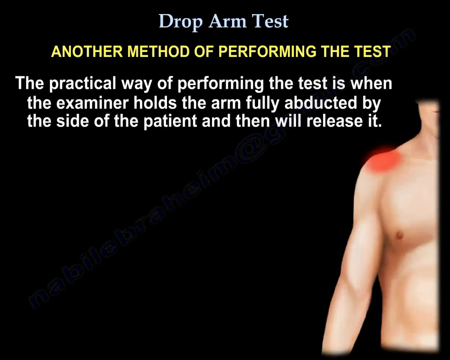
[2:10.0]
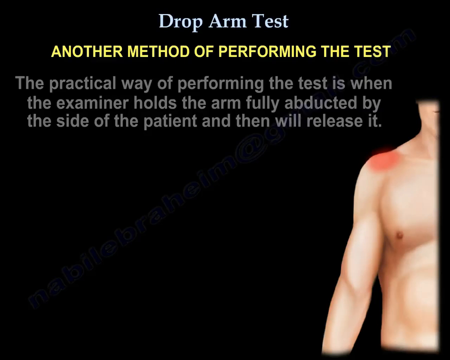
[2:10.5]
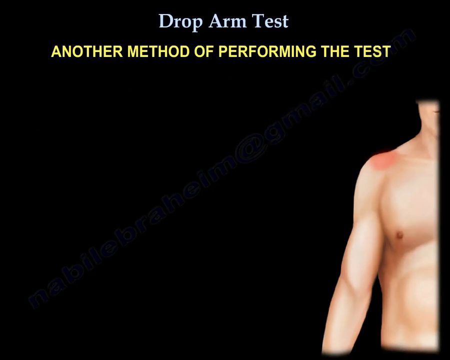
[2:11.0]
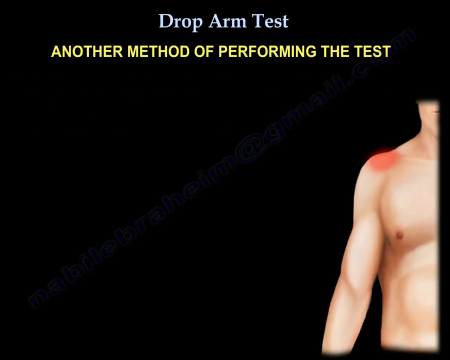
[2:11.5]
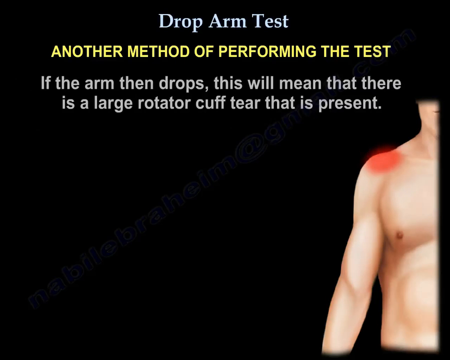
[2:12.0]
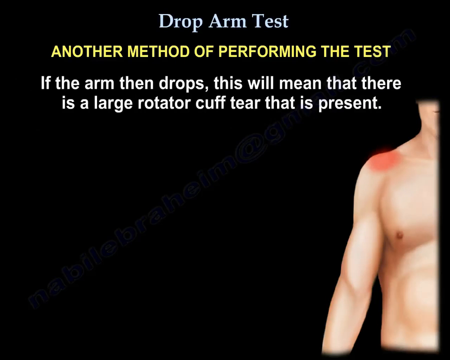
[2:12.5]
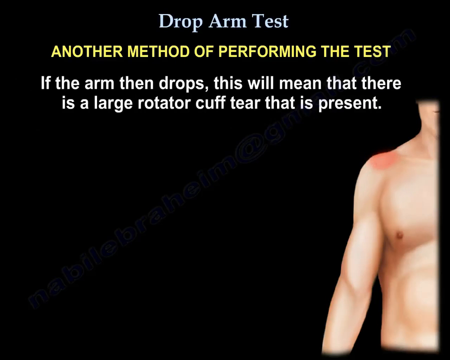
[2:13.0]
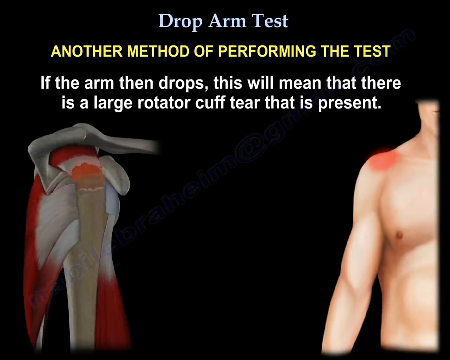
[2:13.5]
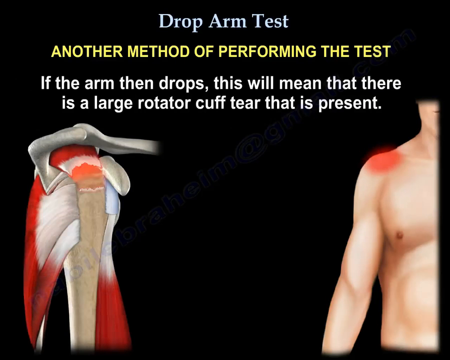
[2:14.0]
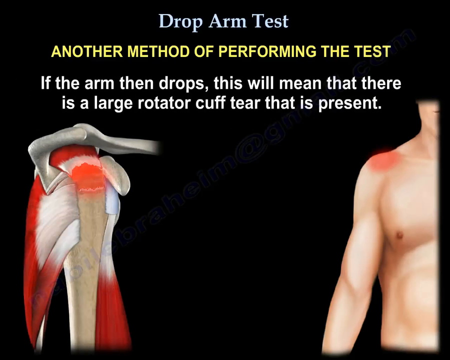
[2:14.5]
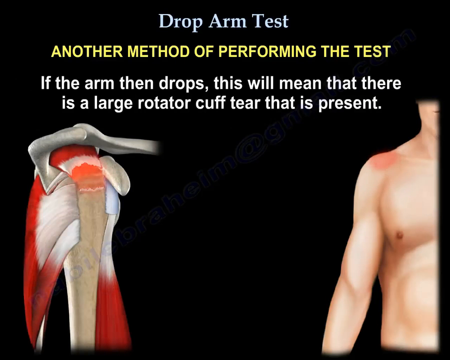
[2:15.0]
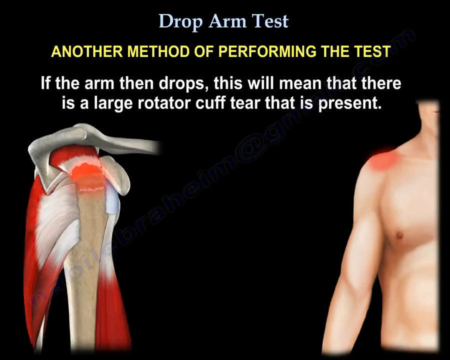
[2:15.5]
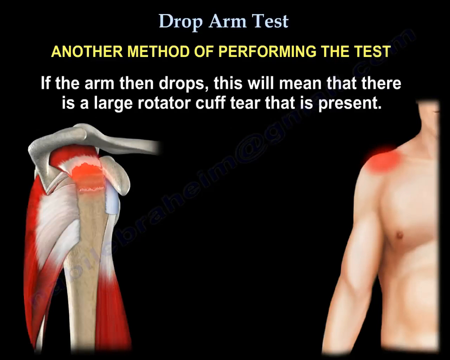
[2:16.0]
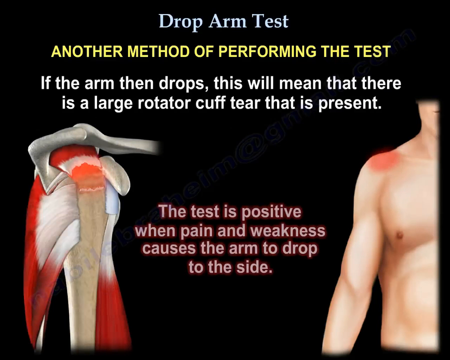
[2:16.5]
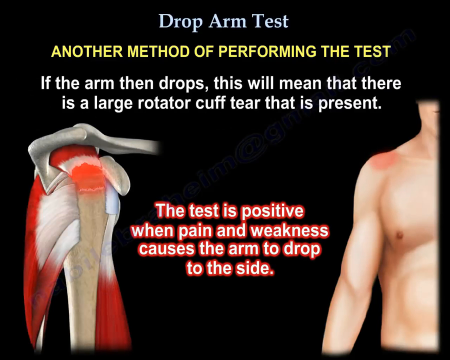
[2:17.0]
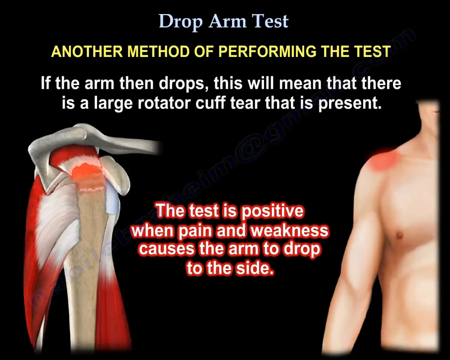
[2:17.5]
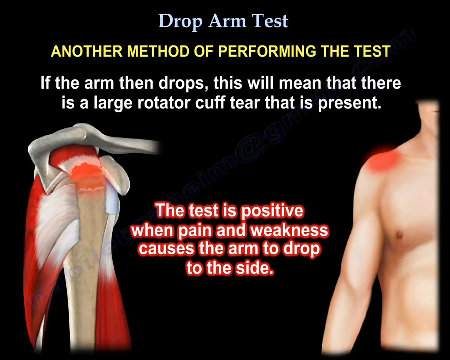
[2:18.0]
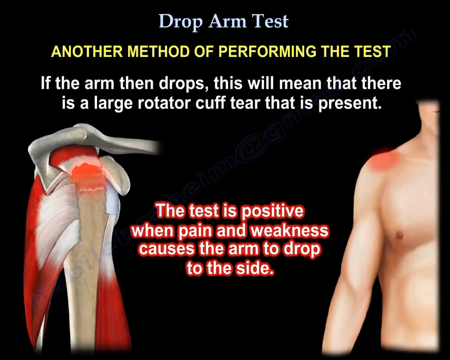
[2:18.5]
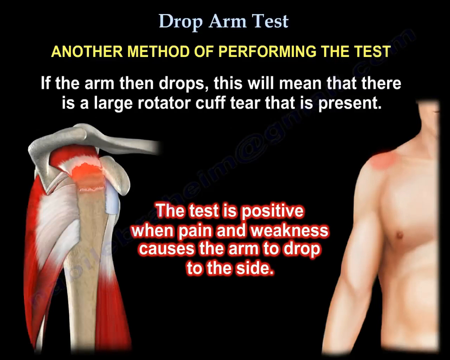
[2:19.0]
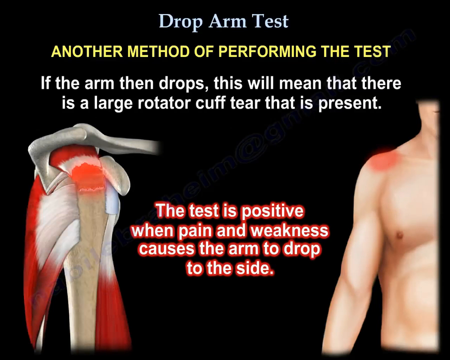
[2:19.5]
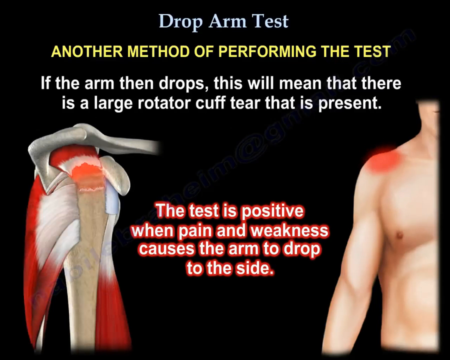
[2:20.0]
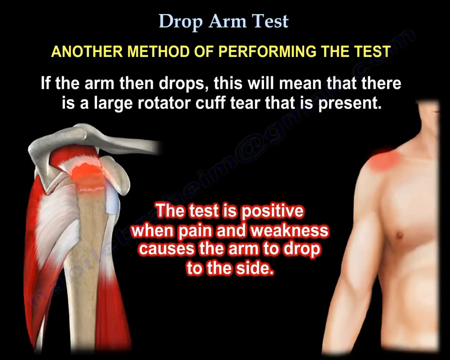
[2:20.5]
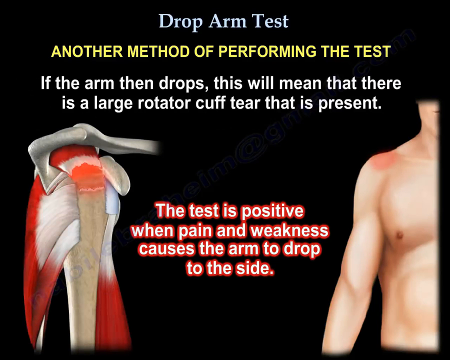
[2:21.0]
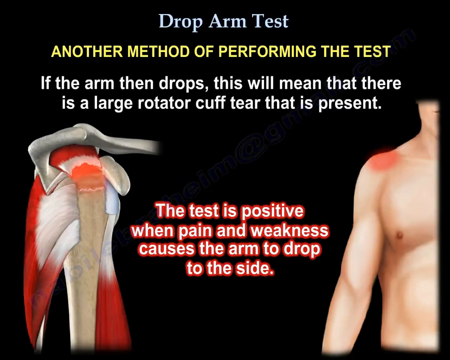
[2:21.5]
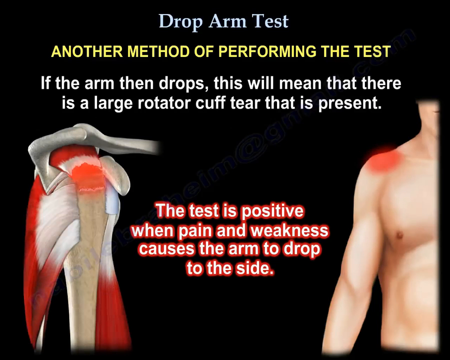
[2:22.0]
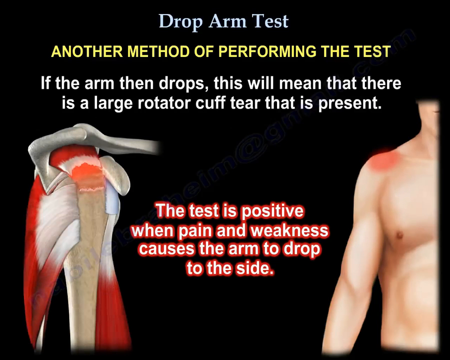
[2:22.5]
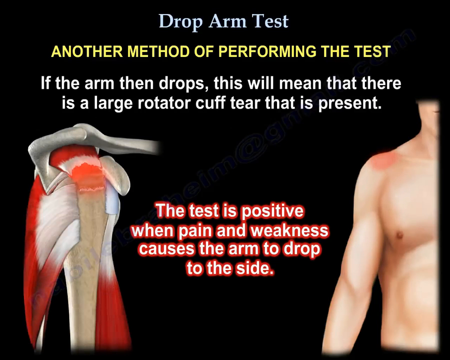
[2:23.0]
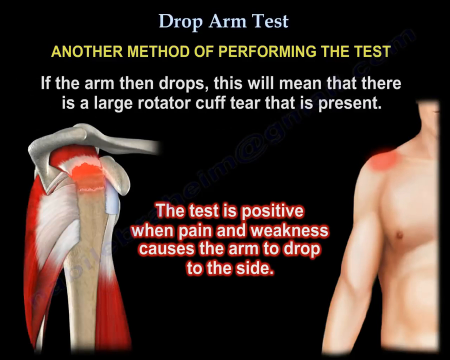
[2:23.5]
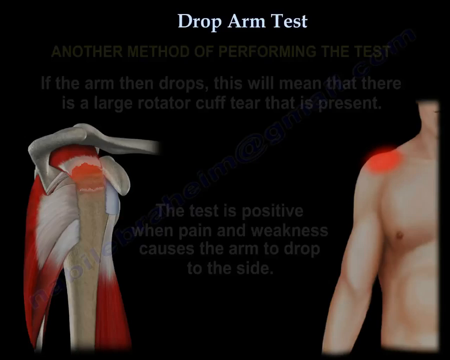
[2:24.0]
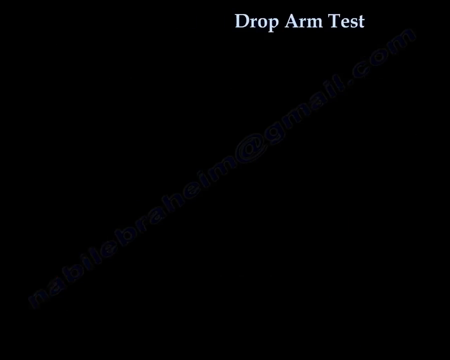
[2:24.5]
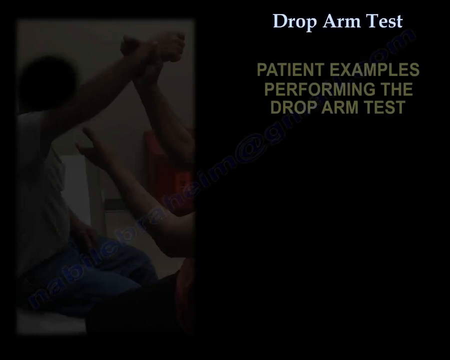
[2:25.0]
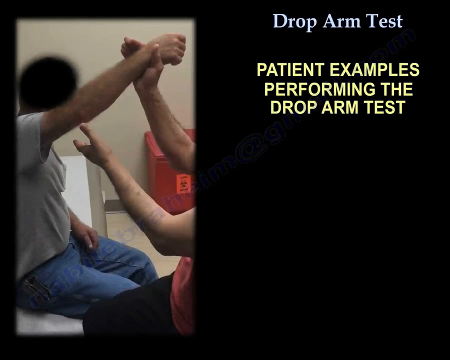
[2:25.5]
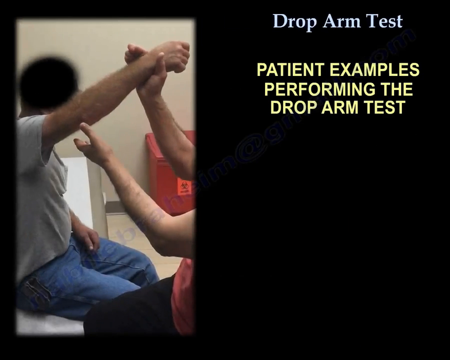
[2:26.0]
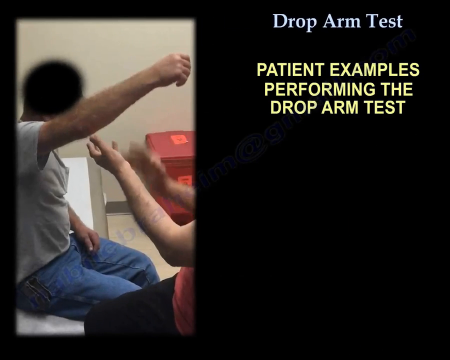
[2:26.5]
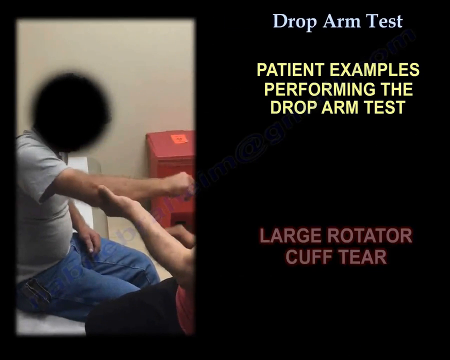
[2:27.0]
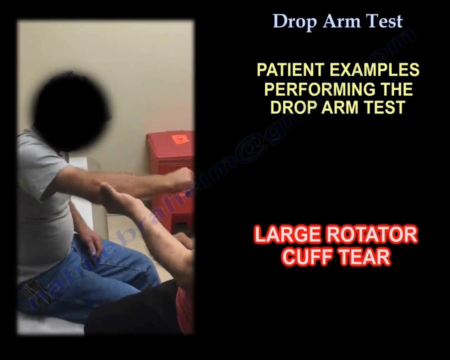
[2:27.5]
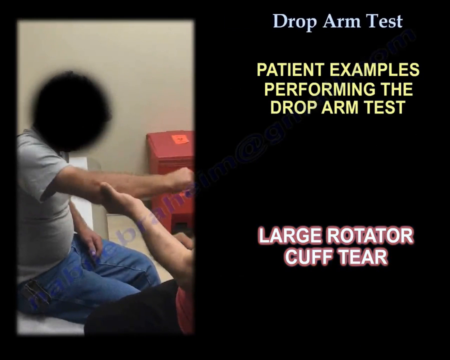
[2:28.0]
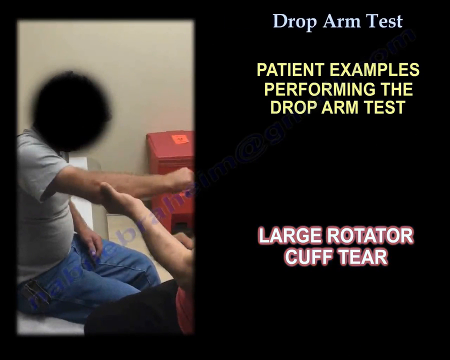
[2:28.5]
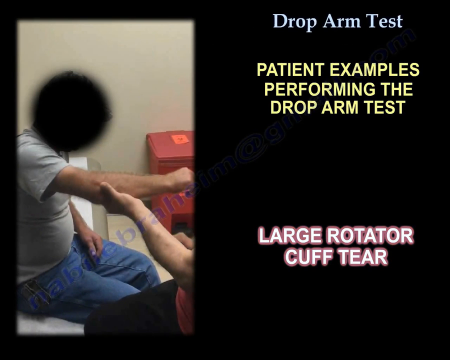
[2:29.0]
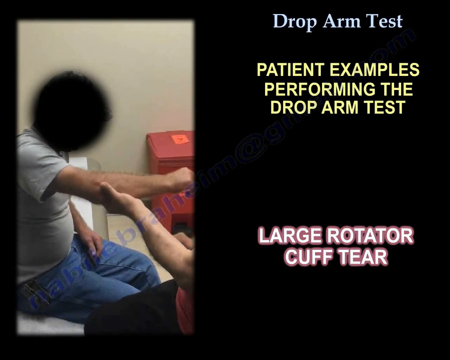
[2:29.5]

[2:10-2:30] The practical method continues, in which the examiner holds the arm fully abducted and releases it; if the arm drops, this indicates a large rotator cuff tear. An animation shows the muscle, the tendon and the rotator cuff, illustrating that the test is positive when pain and weakness cause the arm to drop to the side. The video then switches to real footage of a real person having the drop arm test done in real time, labeled large rotator cuff tears. The person, maybe a man, wears a grey shirt and jeans, and the face is obscured.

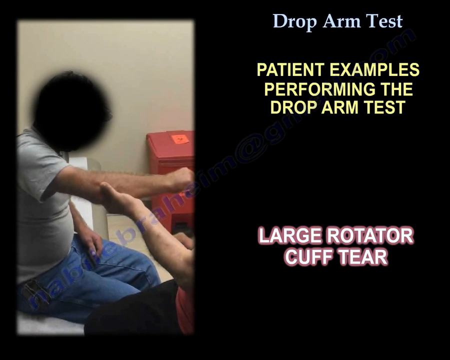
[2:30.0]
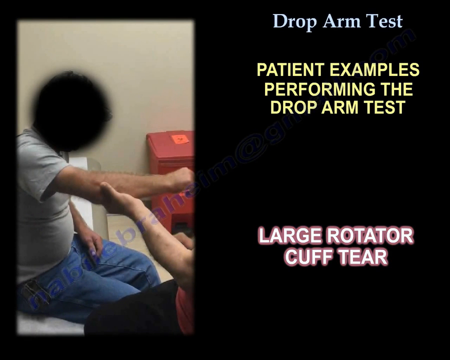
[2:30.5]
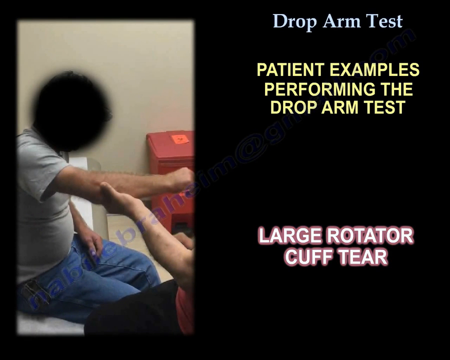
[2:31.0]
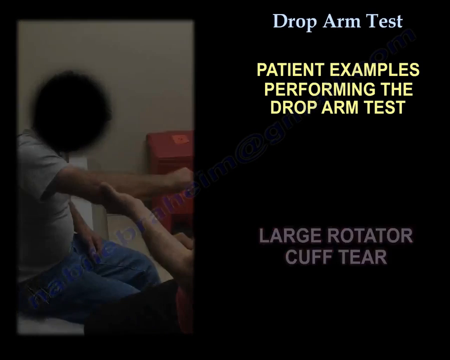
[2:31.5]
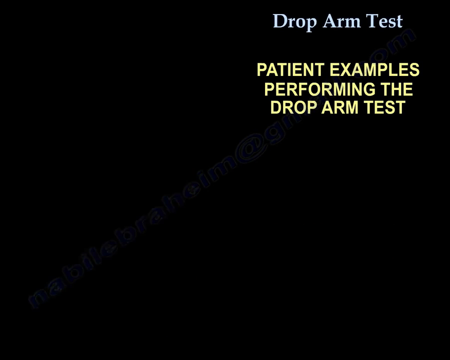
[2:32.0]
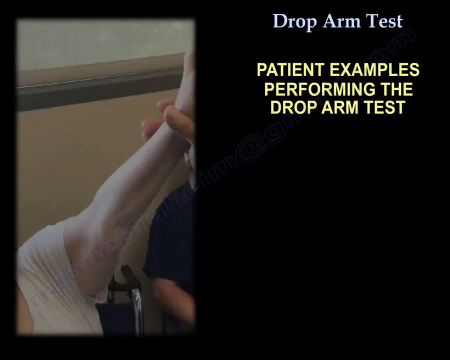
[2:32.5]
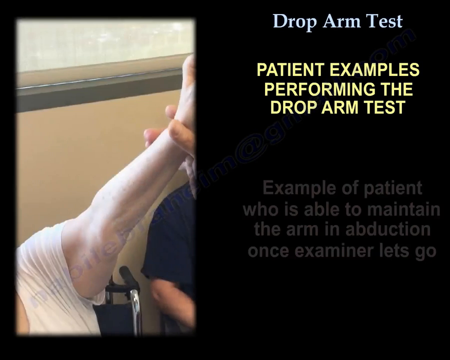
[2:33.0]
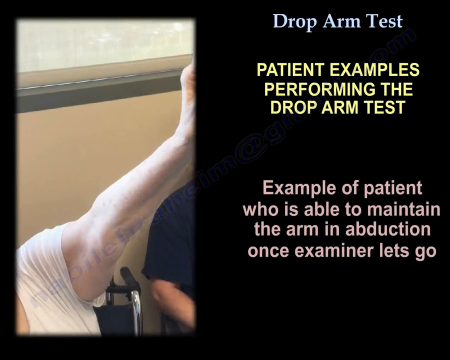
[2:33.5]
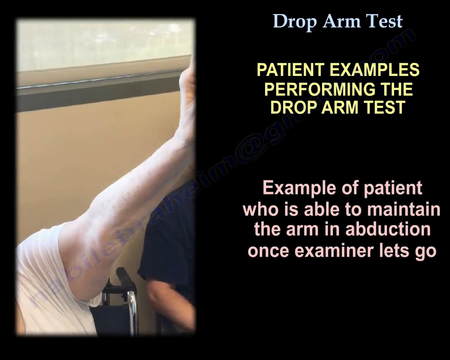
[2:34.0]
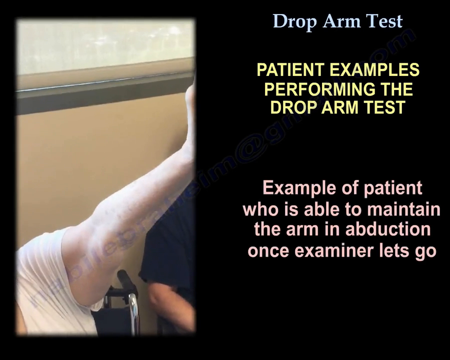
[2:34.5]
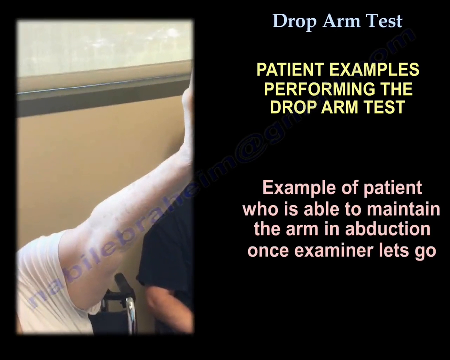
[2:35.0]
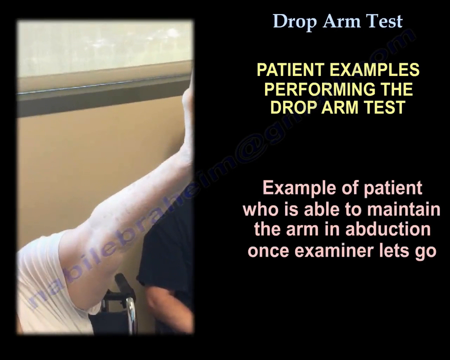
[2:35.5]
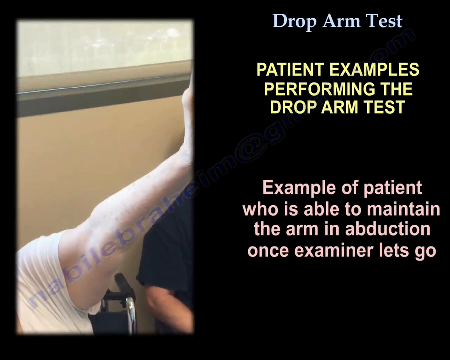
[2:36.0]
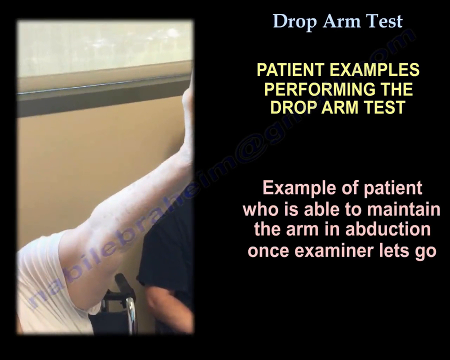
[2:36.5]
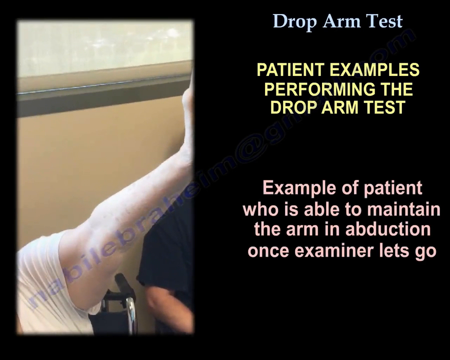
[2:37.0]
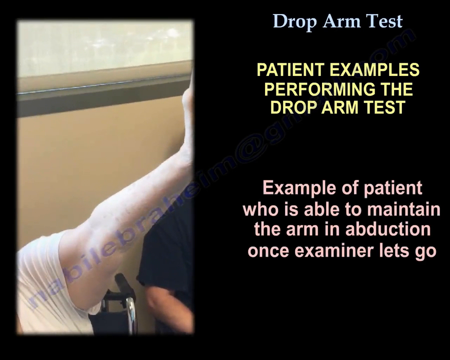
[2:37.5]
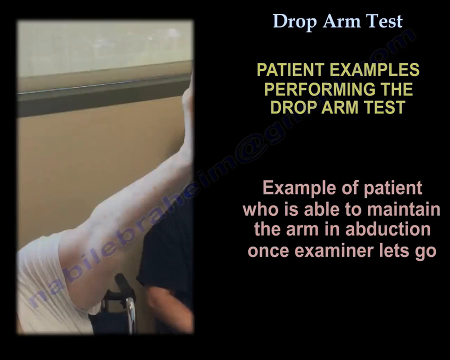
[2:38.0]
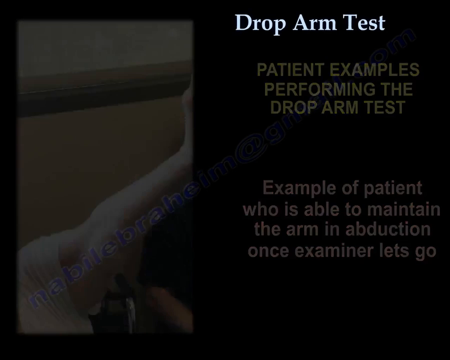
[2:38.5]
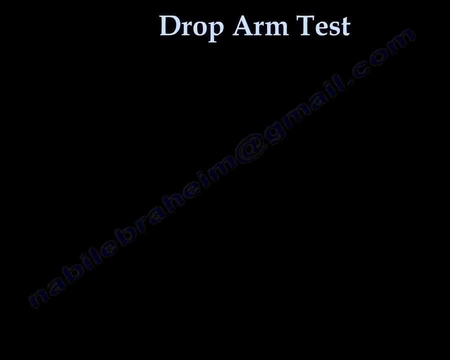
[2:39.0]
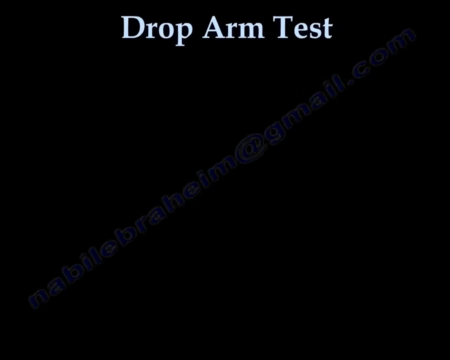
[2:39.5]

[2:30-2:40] The real footage of the drop arm test continues, indicating large rotator cuff tears. The video then switches to another person, possibly the same patient, who may be sitting in a chair and wearing a blue shirt, while another person holds the arm up. This patient is able to hold the arm in the abduction position as the examiner lets go, giving two real examples: one where the person cannot hold the arm and one where the person can.